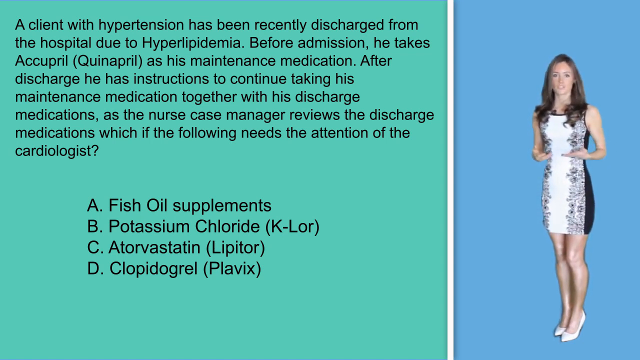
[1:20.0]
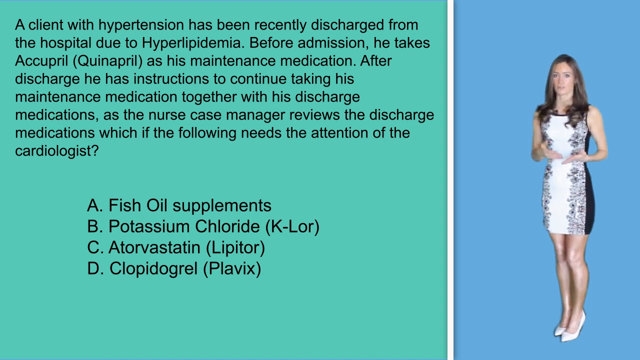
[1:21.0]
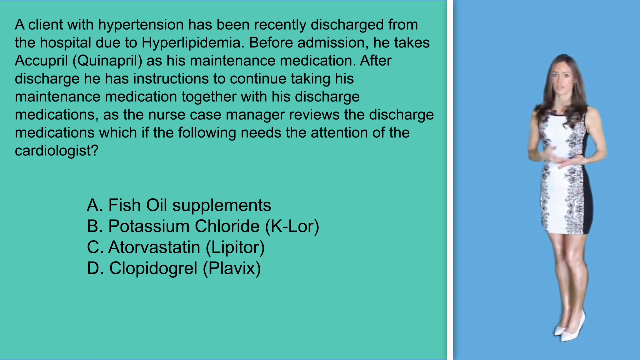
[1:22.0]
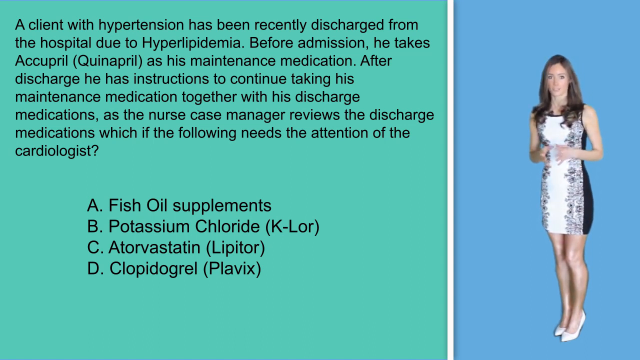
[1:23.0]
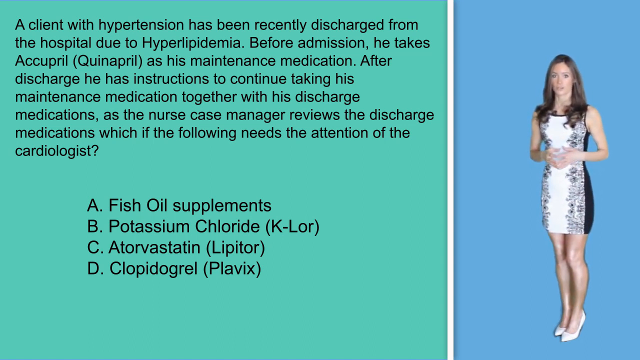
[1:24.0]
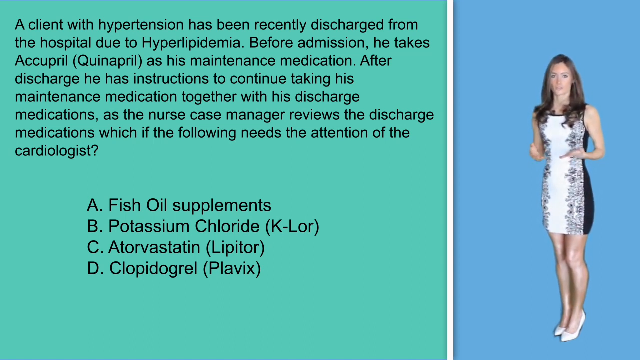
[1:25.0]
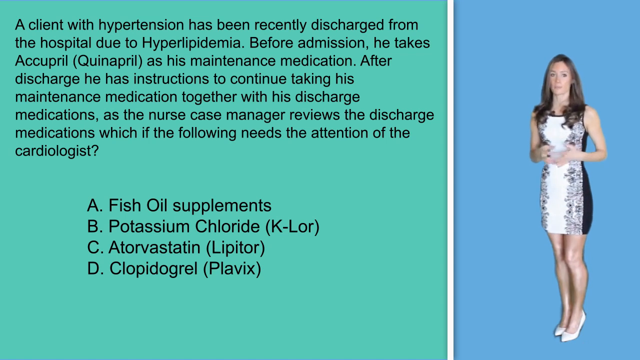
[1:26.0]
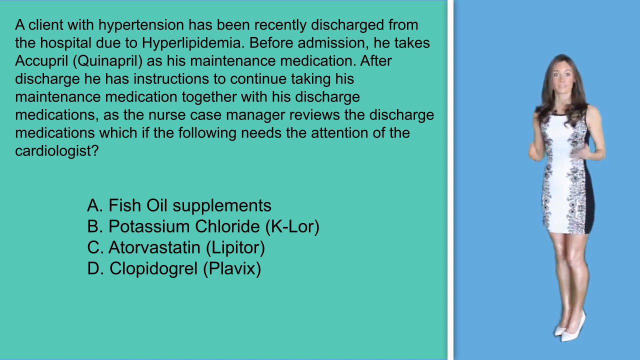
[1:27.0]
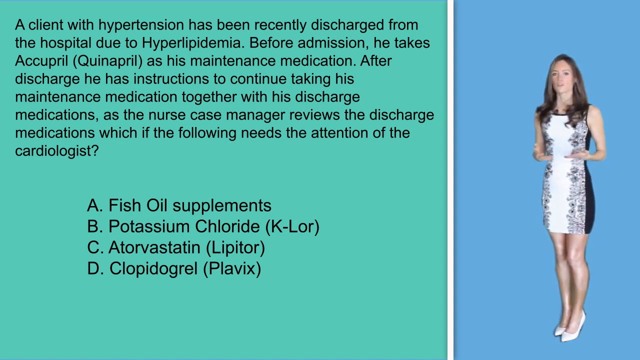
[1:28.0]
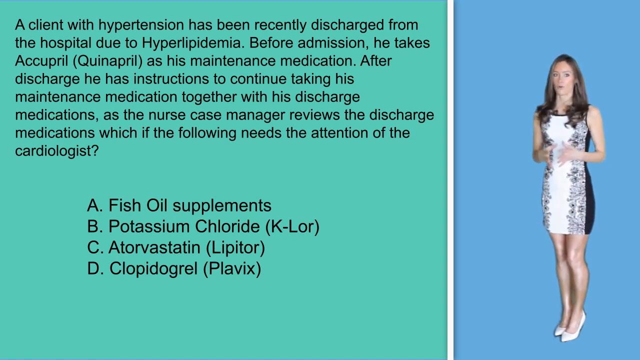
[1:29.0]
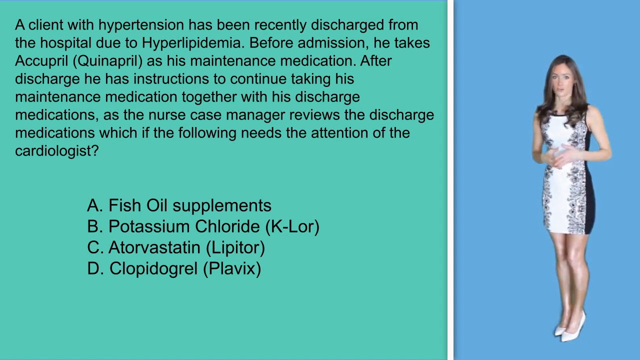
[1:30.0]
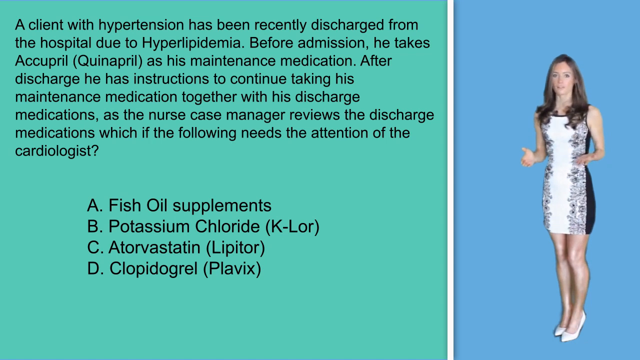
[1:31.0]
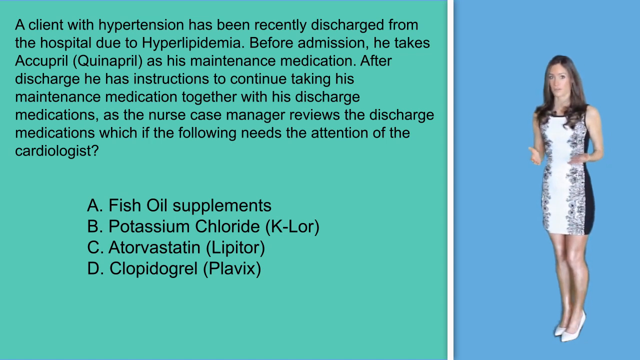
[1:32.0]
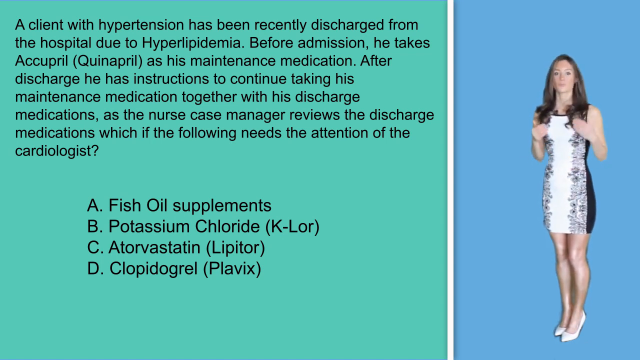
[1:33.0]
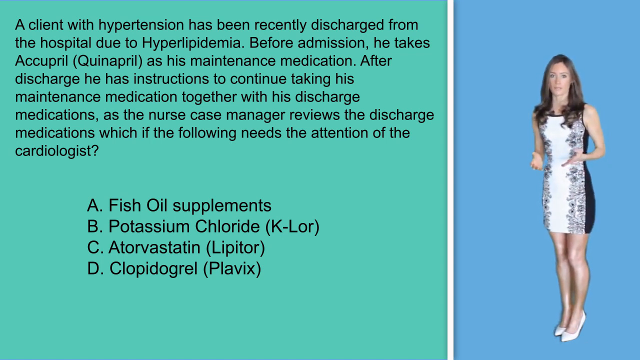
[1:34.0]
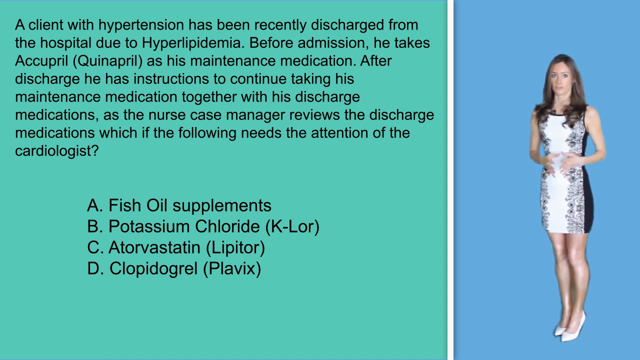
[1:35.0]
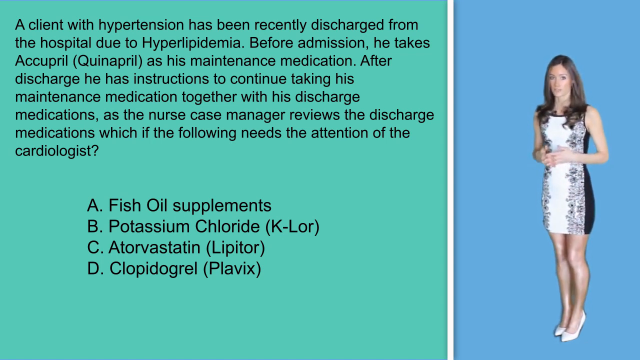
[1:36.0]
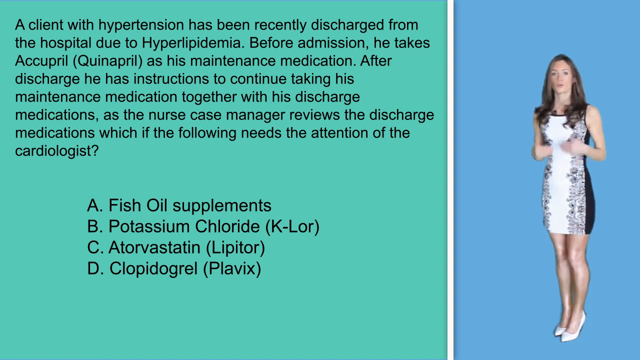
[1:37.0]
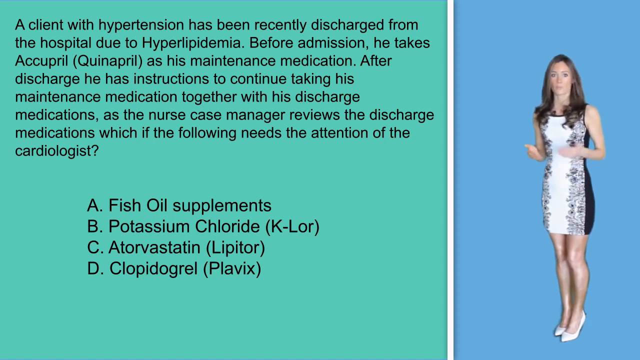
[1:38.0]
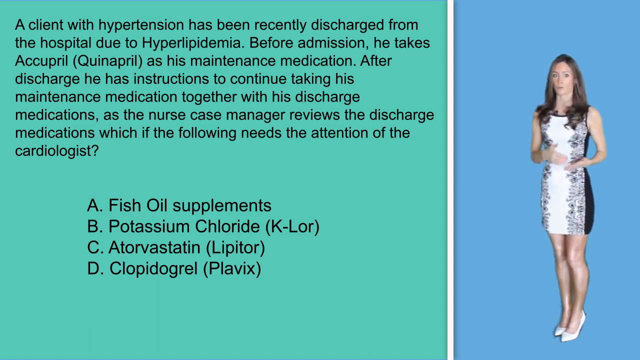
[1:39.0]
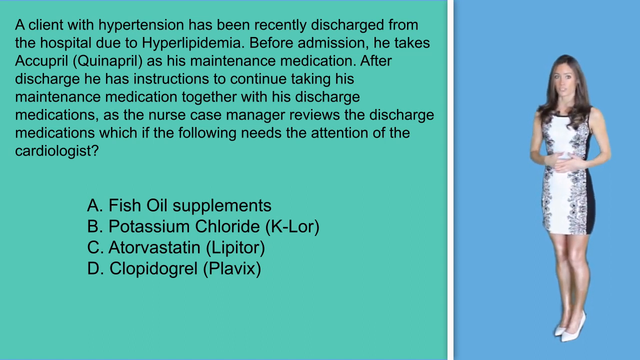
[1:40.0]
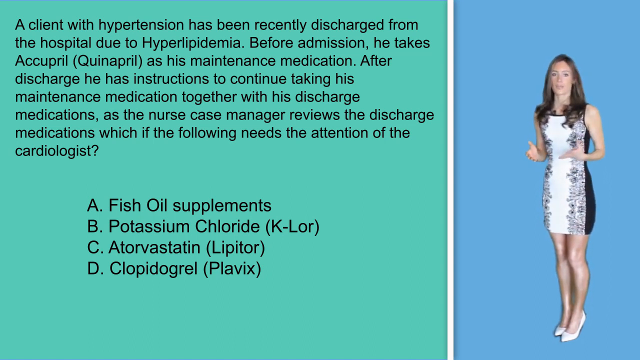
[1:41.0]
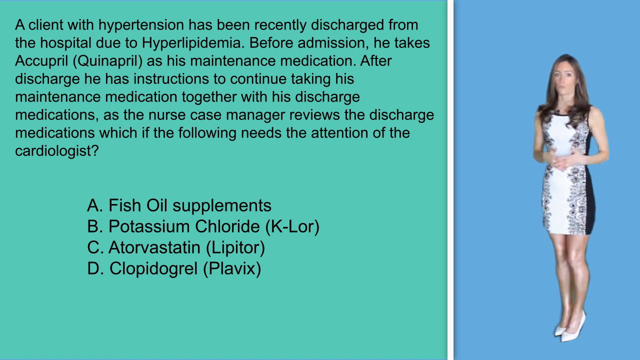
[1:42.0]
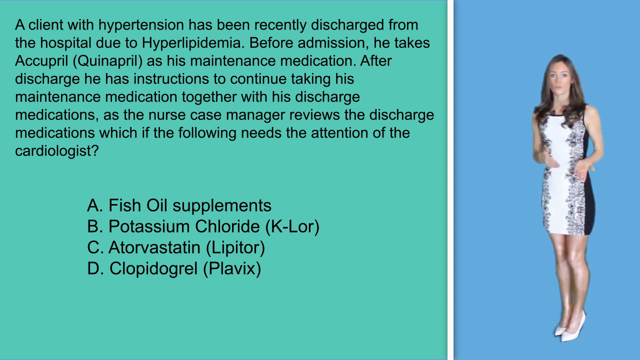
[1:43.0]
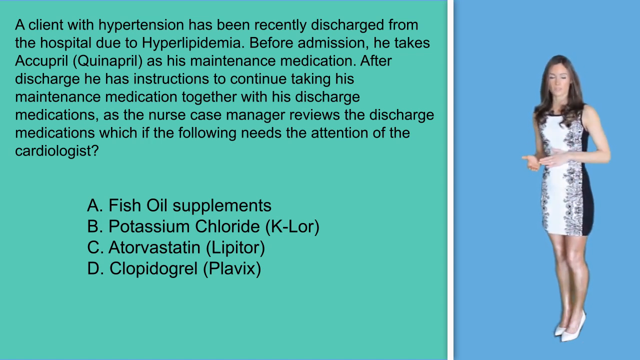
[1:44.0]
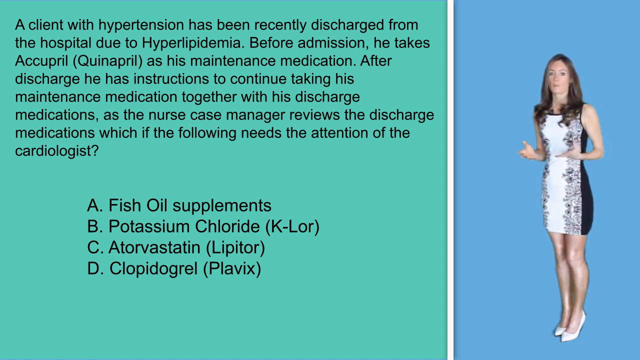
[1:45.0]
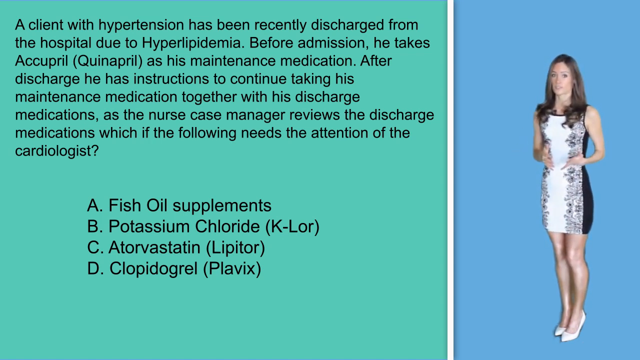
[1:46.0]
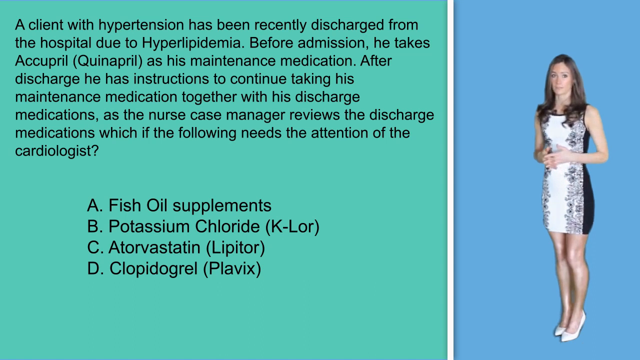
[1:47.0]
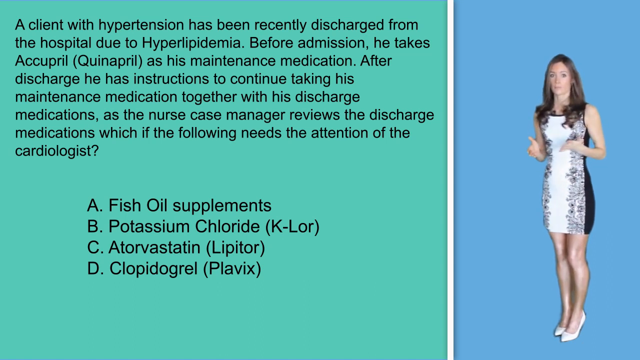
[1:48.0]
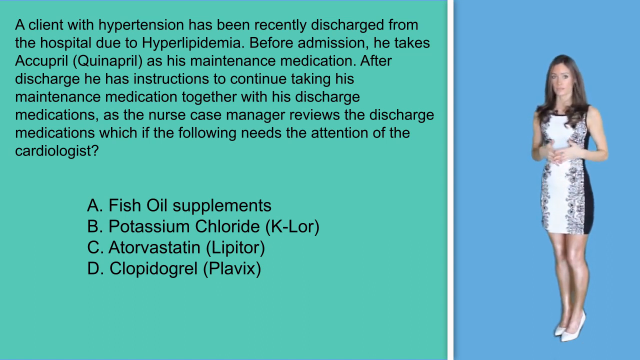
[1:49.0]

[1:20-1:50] Against a light blue background on the right, a woman in a black and white floral dress with white heels and dark hair stands and speaks. On the left, a robin's egg blue background shows black text: "A client with hypertension has been recently discharged from the hospital due to hyperlipidemia. Before admission, he takes Quinapril as his maintenance medication. After discharge, he has instructions to continue taking his maintenance medication together with his discharge medications. As the nurse case manager reviews the discharge medications which of the following needs the attention of a cardiologist," followed by options lettered A through D: "A fish oil supplements", "B potassium chloride", "C Lipitor", "D Plavix". The shot lingers on the question for a while as she stands speaking to the camera, repeatedly bringing her hands out and back in, looking directly into the camera the whole time. There potentially is a mic clipped to her. Her dress has a white center with floral decorations down either side, and she has brown hair in soft, somewhat curly waves.